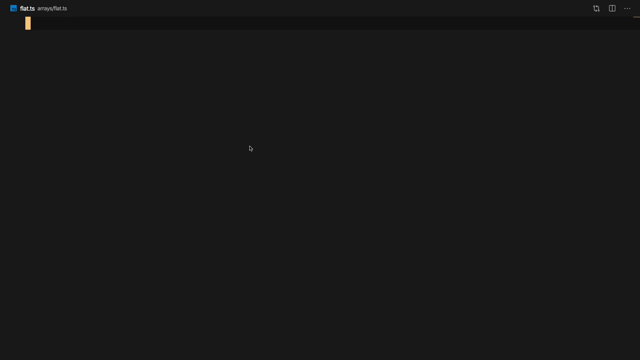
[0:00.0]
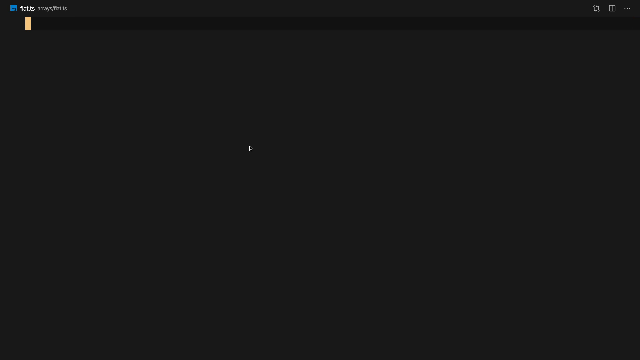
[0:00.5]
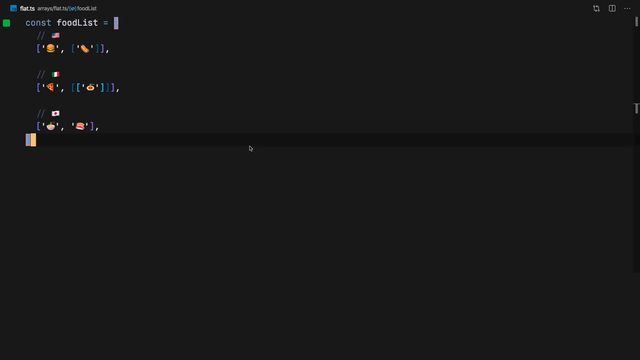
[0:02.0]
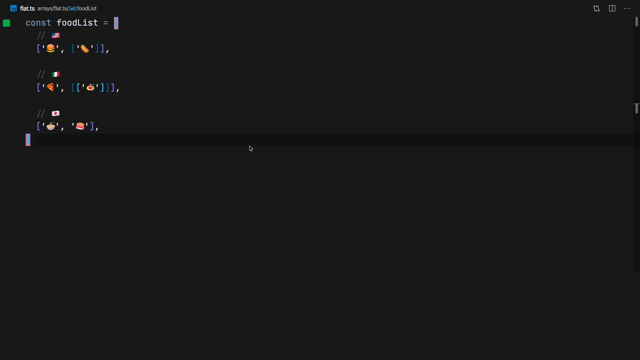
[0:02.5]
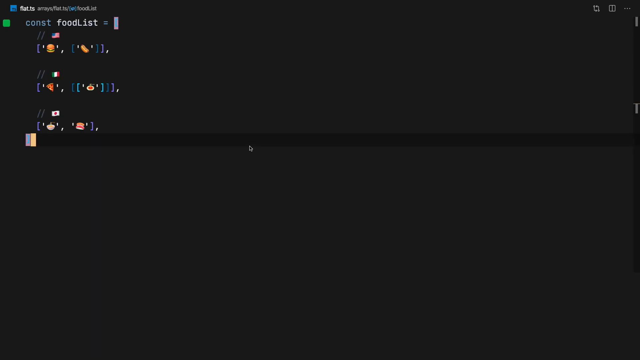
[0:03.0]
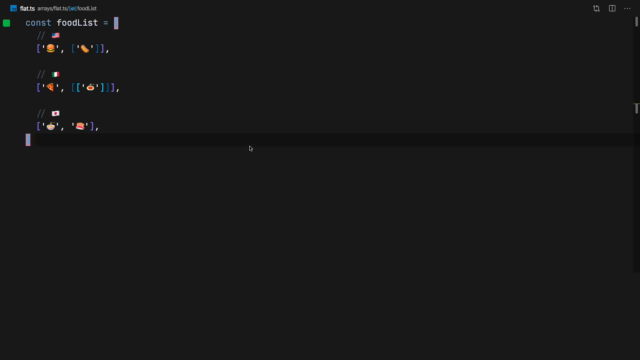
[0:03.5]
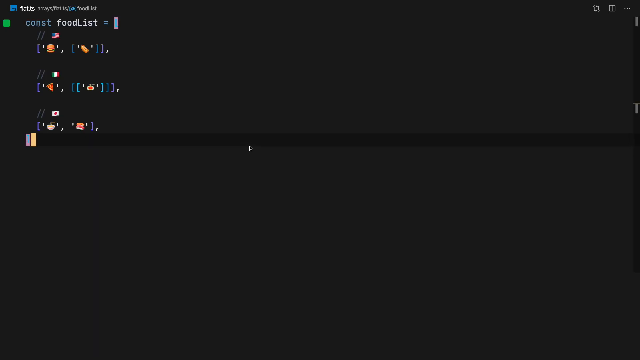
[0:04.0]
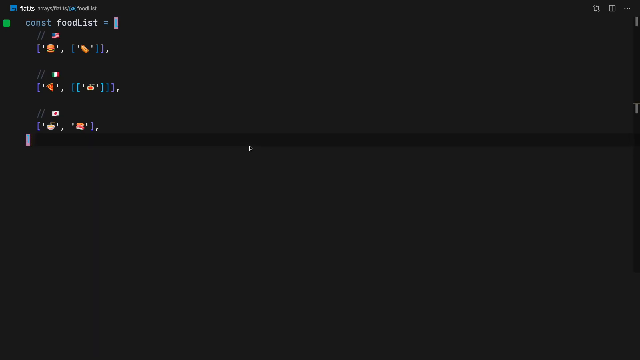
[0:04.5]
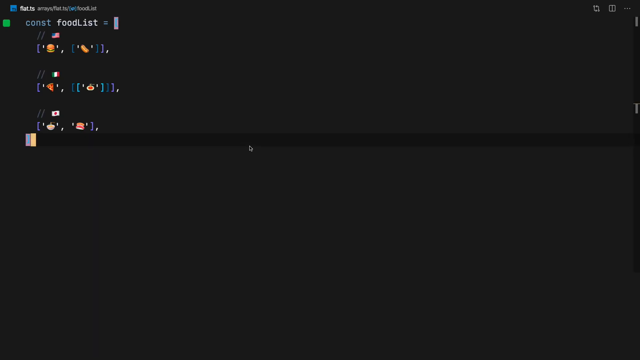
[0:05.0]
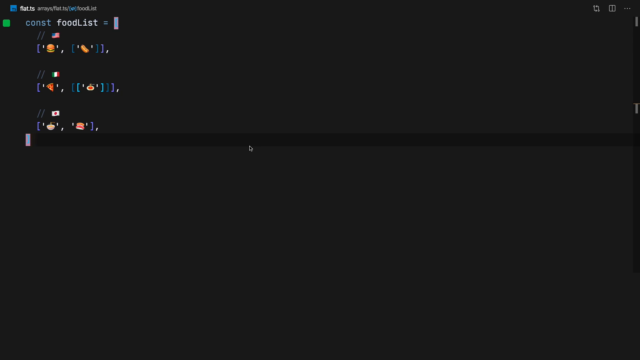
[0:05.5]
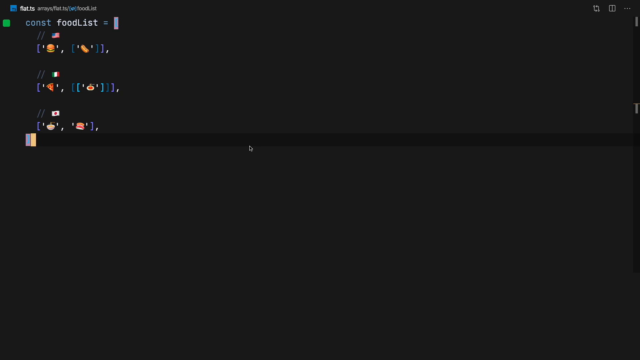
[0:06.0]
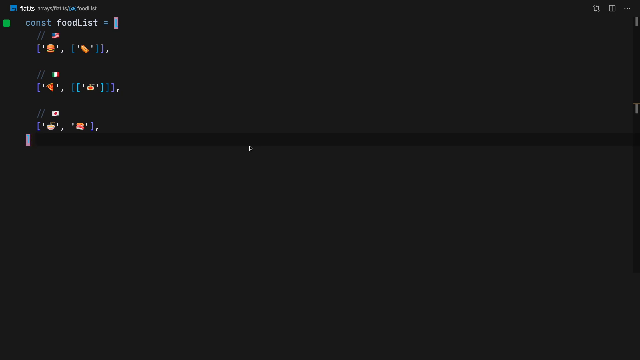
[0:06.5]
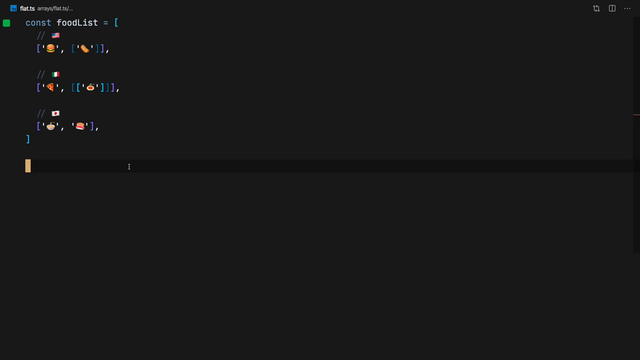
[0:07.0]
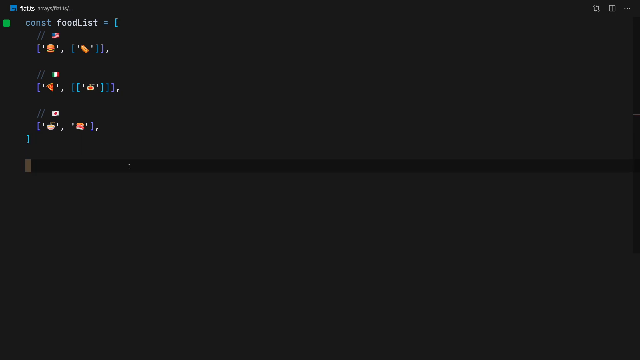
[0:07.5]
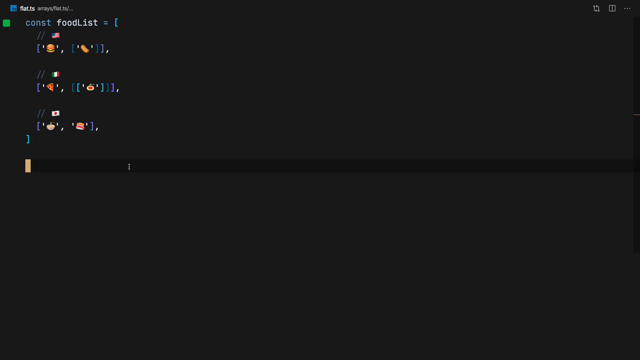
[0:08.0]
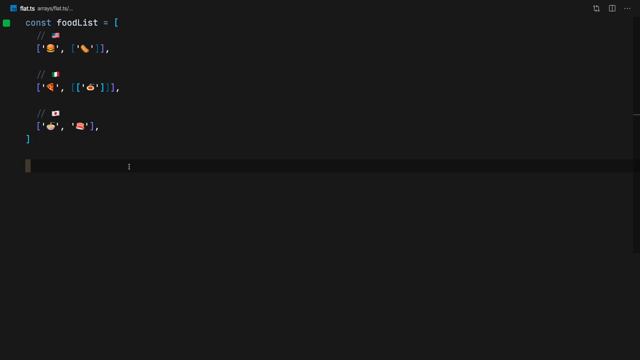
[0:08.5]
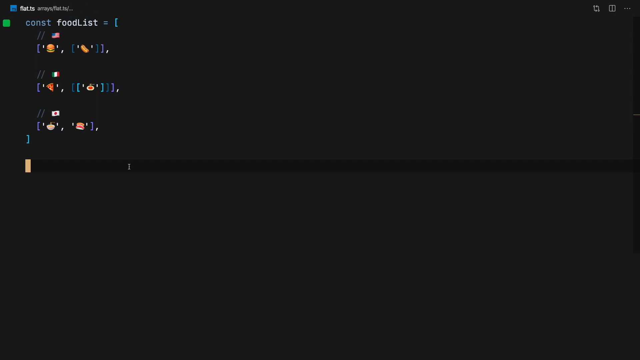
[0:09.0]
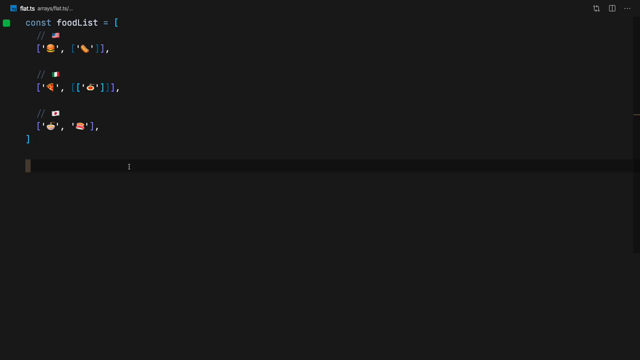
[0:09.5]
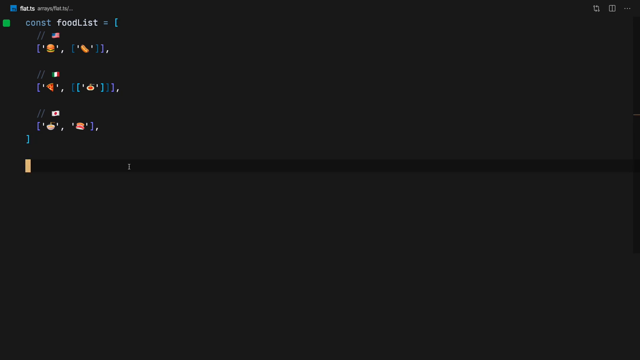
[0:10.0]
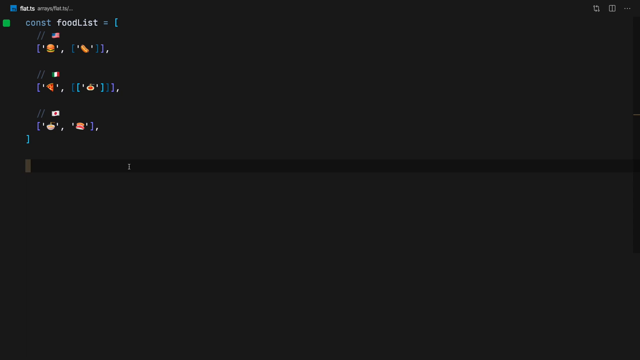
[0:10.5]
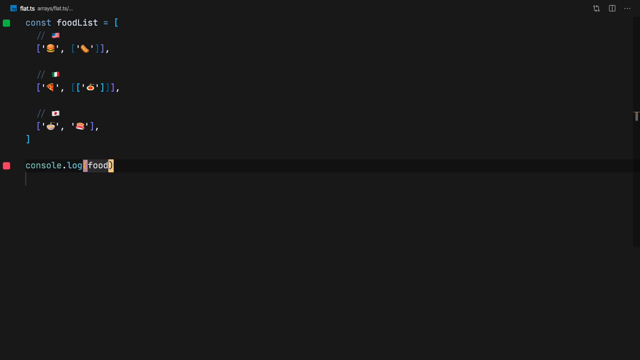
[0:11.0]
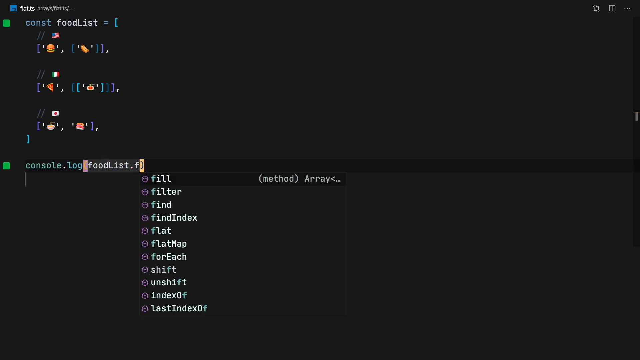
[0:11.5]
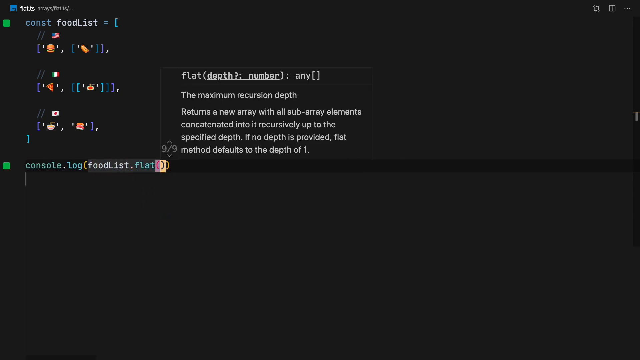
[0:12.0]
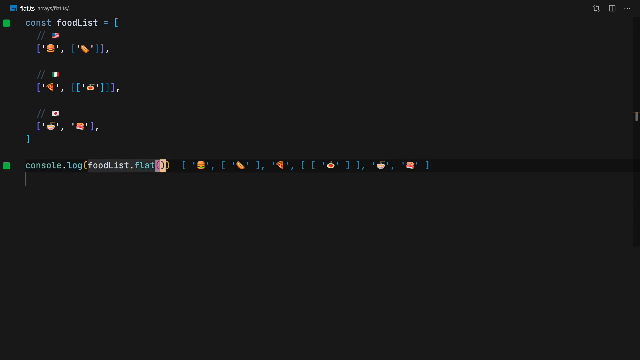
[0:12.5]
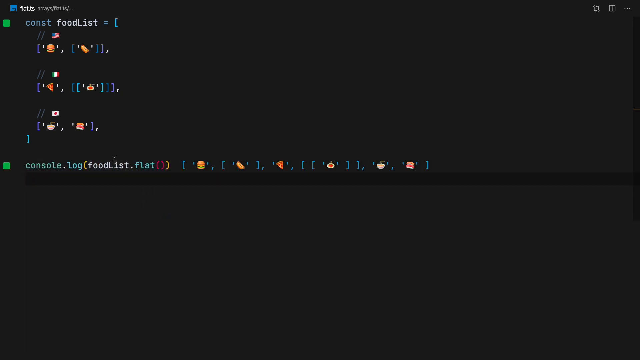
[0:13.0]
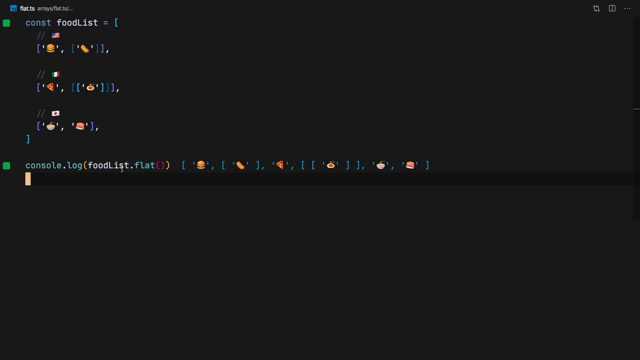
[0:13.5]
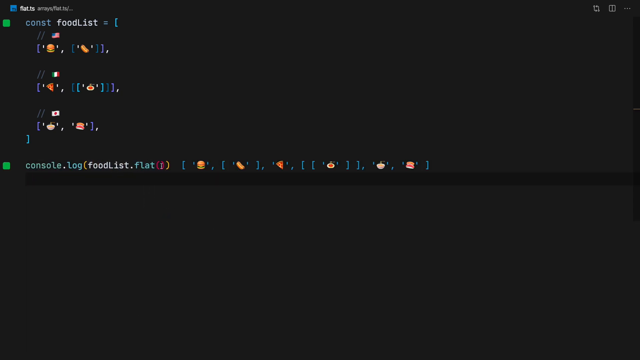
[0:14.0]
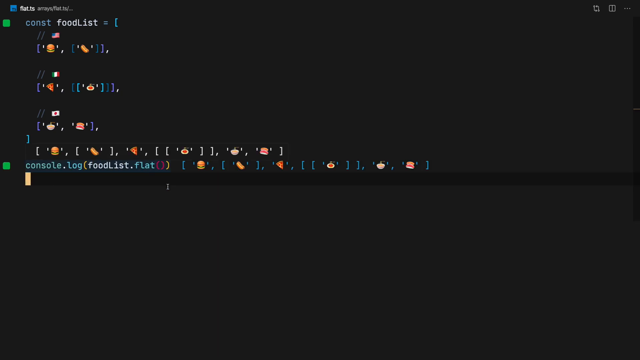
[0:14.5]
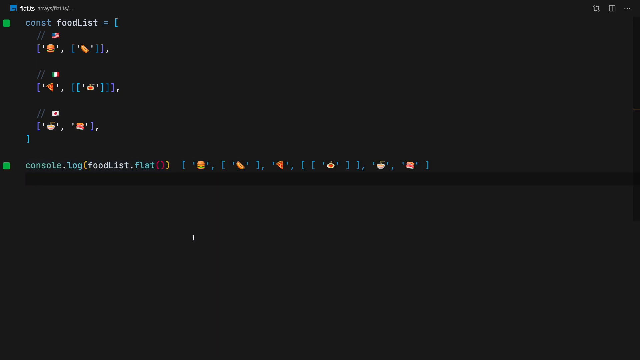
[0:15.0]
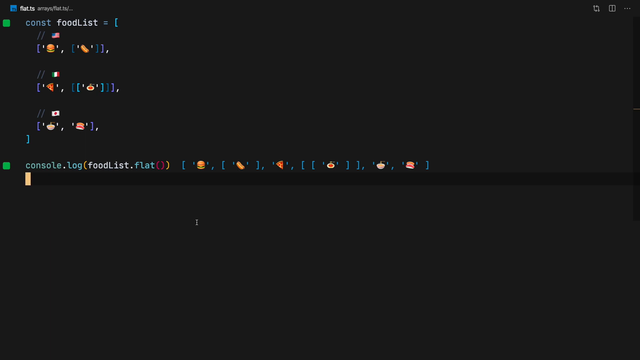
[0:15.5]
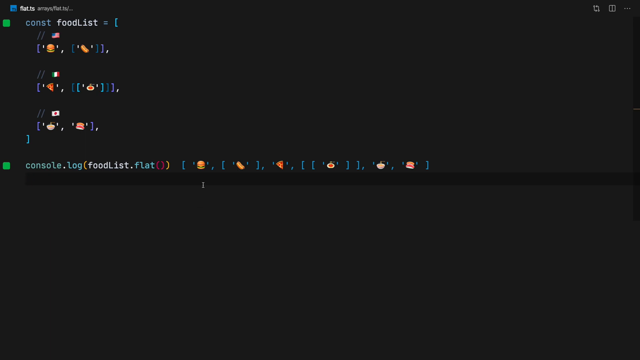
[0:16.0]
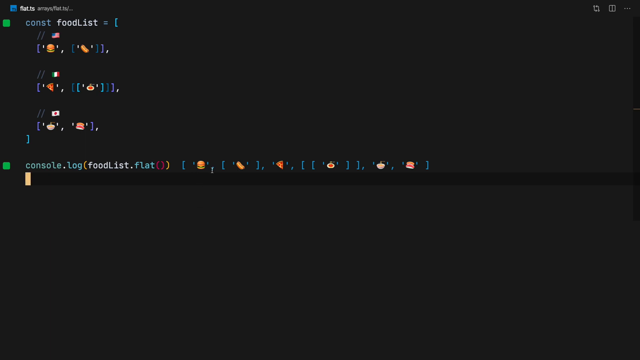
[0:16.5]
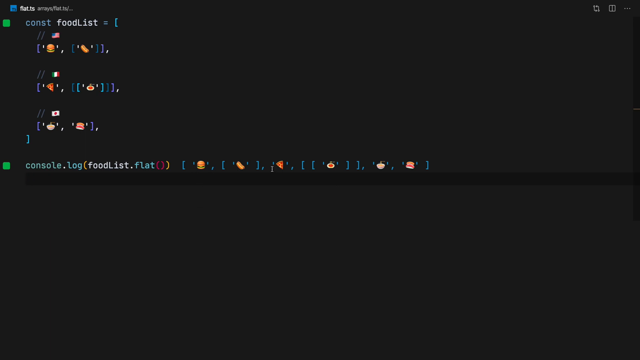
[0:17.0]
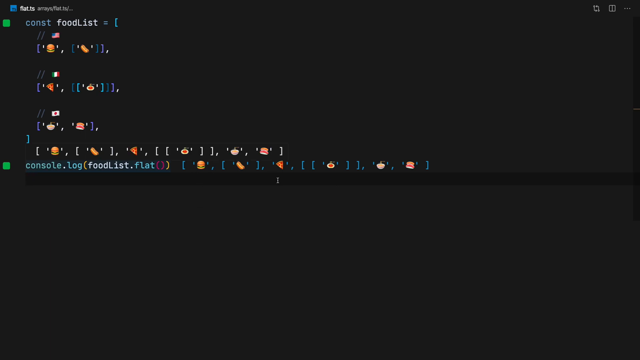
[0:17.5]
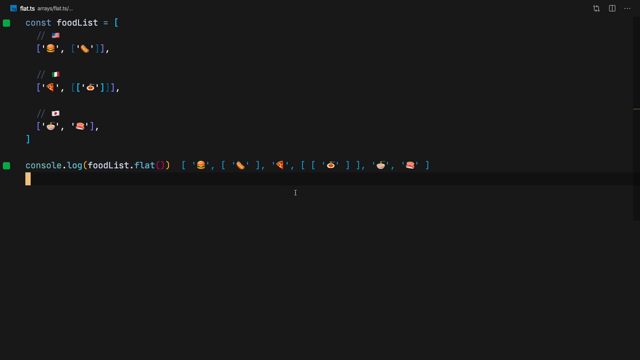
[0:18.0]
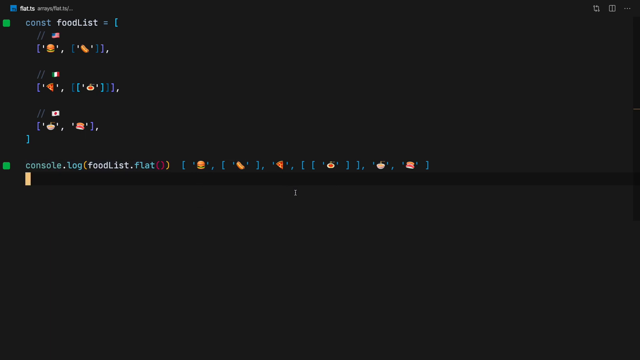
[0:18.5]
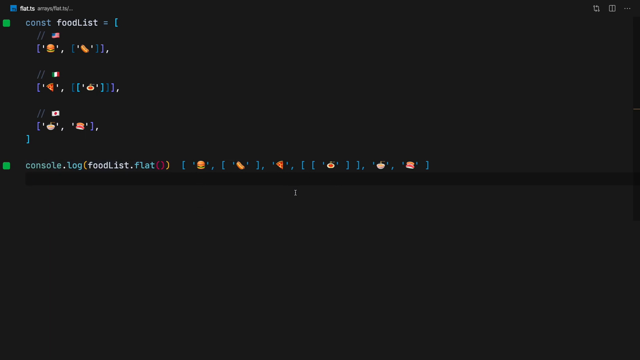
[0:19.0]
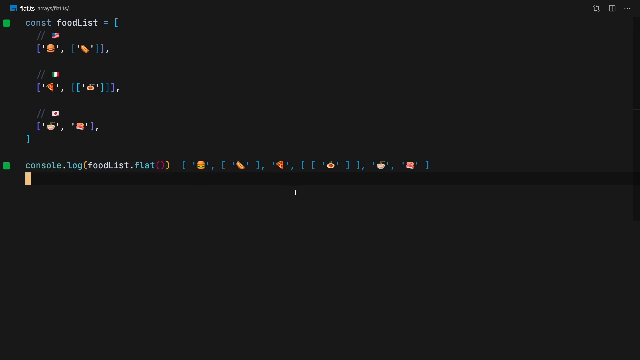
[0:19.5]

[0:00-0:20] Against a black background, what appears to be an interactive development environment shows what appears to be a variable being listed, with several parameters that appear to be emojis. The user presses Enter and types a function called console.log with the parameters food list inside it. A list of several food items represented by emojis appears. One appears to be a hamburger and one appears to be pizza; the four others are indiscernible due to the video quality. In total there are six food items in the food list. Within the food list, the items are separated by nationality: the hamburger is under a commented-out American flag, the pizza is under a commented-out Italian flag, and a pasta dish, or possibly sushi, is under a commented-out Japanese flag.